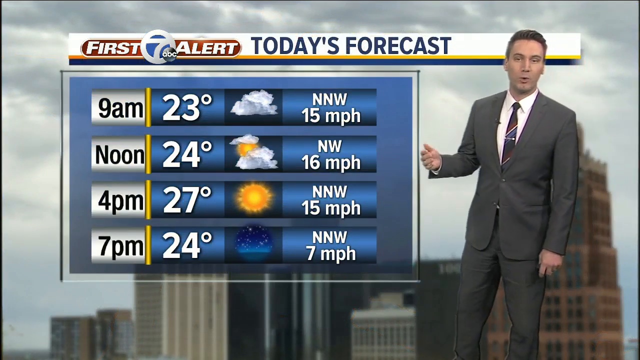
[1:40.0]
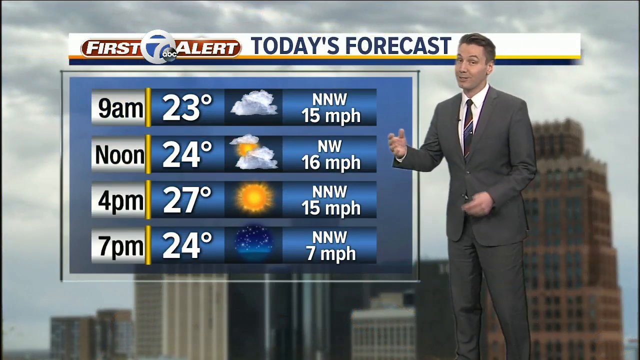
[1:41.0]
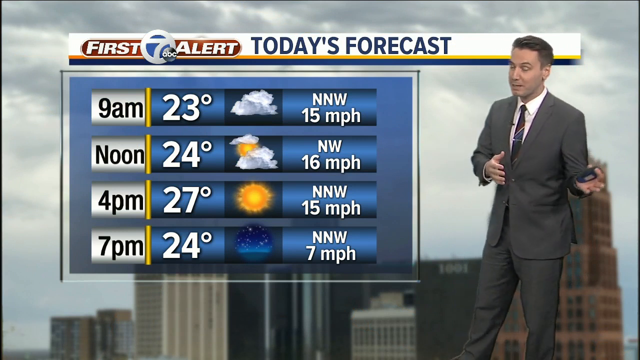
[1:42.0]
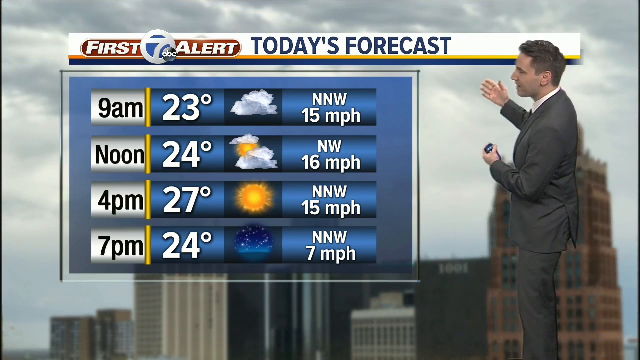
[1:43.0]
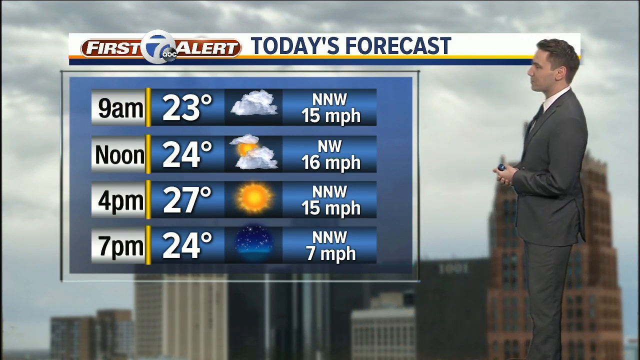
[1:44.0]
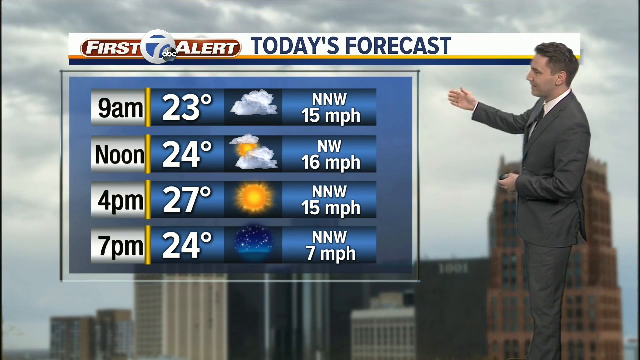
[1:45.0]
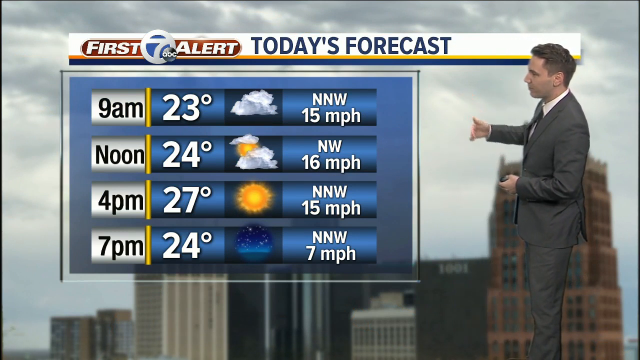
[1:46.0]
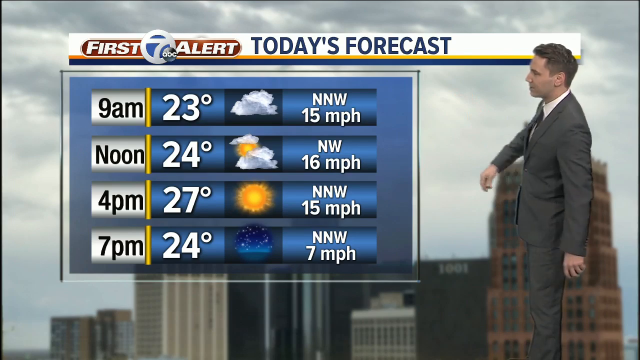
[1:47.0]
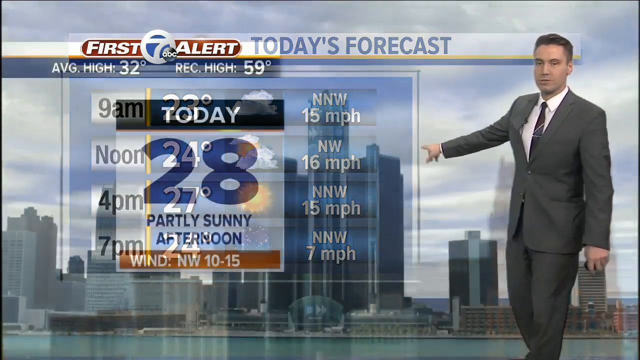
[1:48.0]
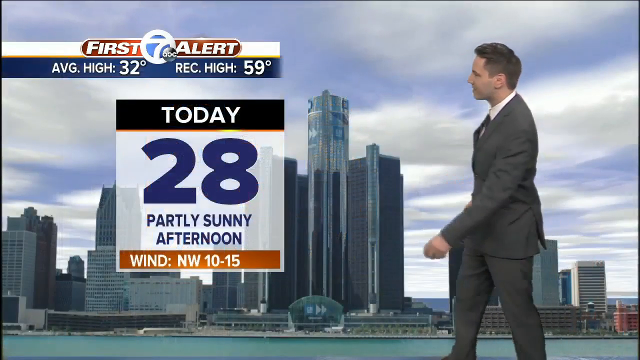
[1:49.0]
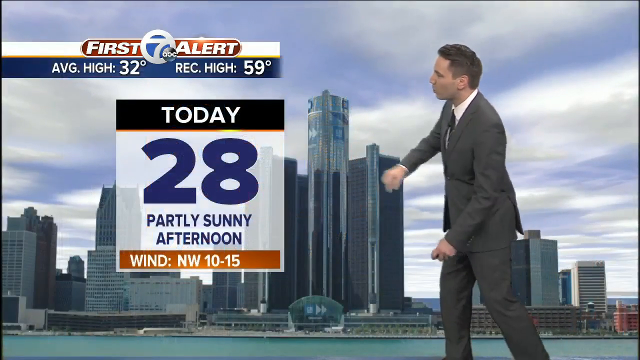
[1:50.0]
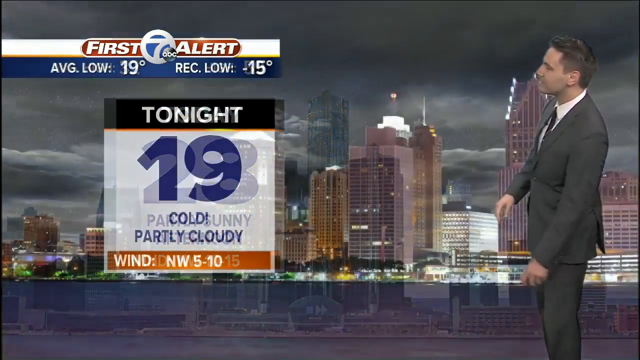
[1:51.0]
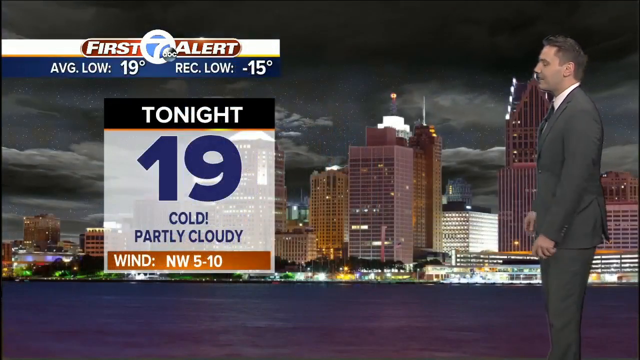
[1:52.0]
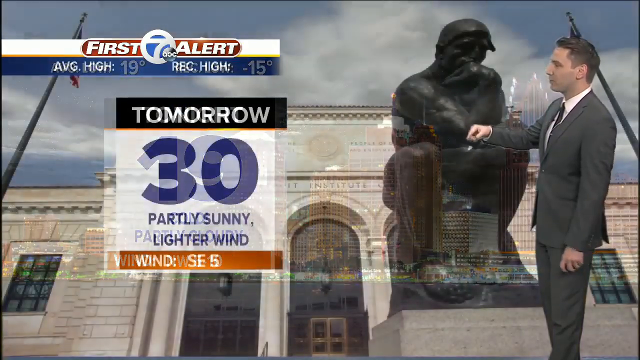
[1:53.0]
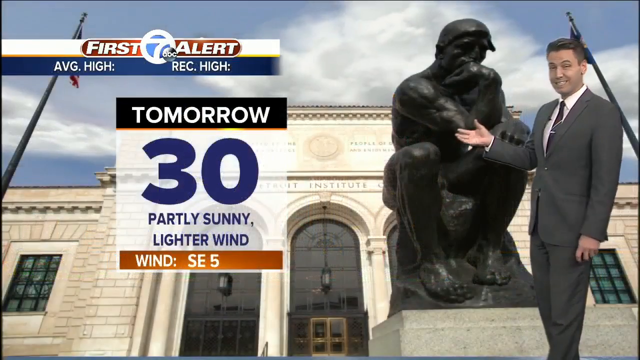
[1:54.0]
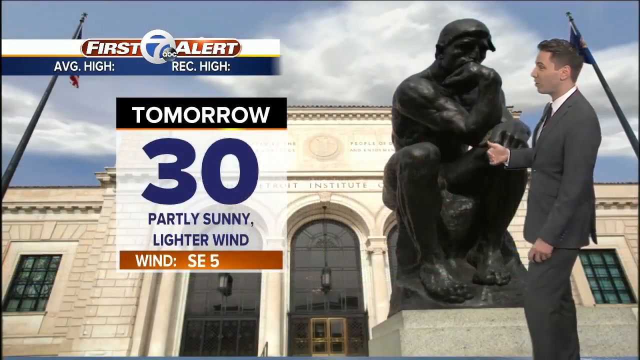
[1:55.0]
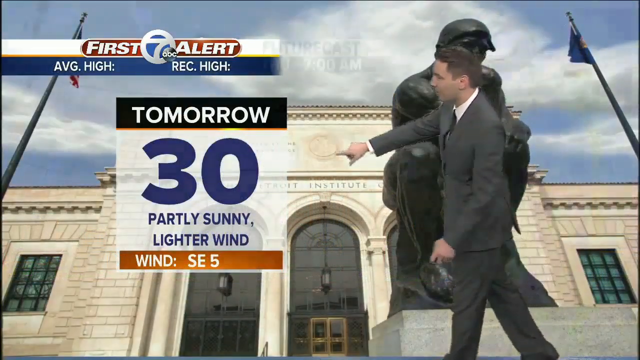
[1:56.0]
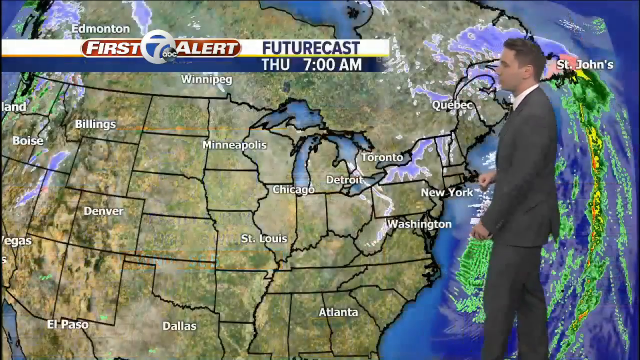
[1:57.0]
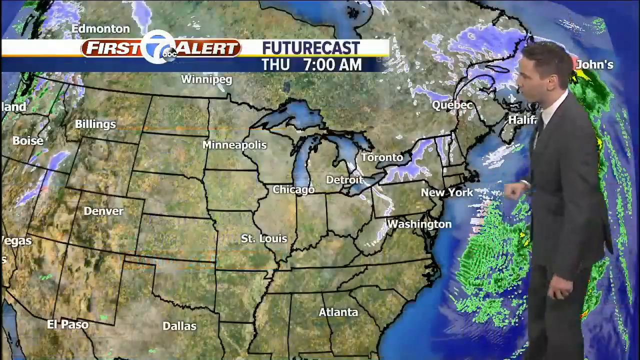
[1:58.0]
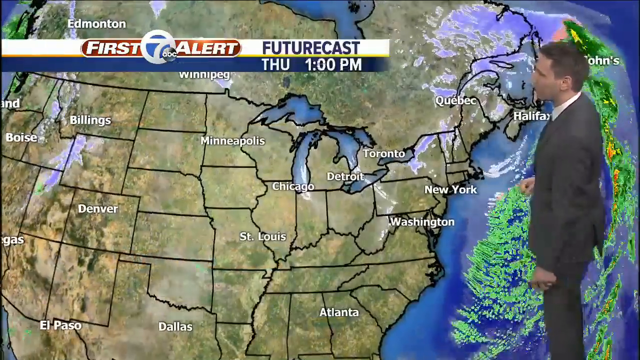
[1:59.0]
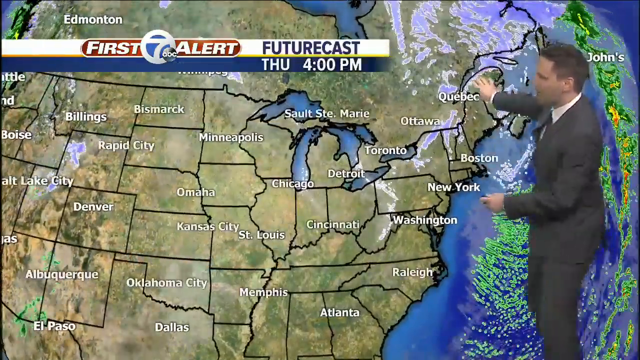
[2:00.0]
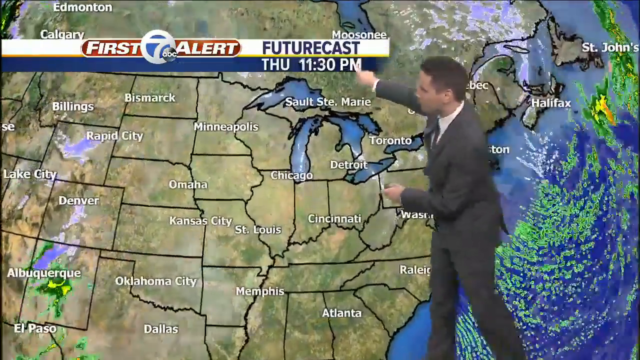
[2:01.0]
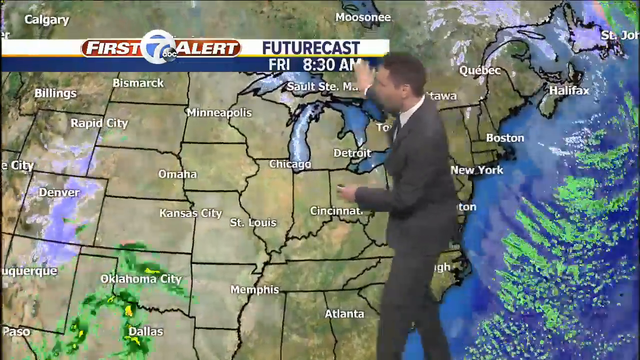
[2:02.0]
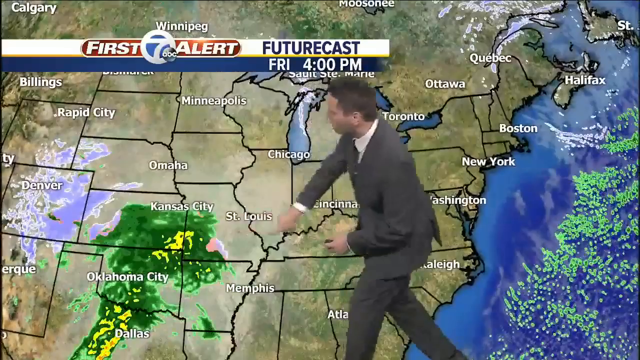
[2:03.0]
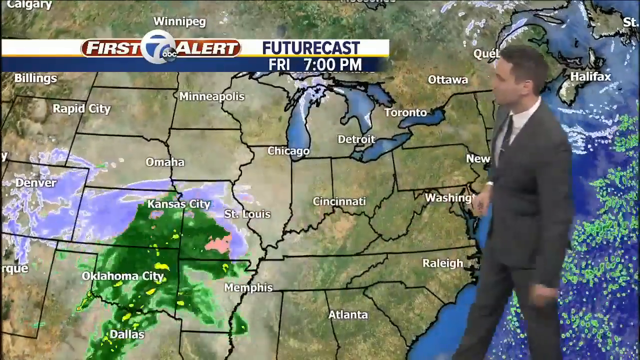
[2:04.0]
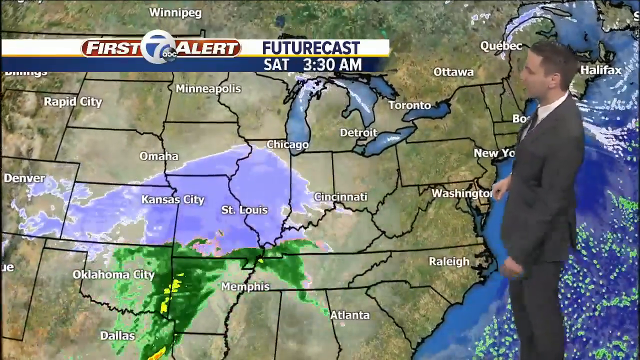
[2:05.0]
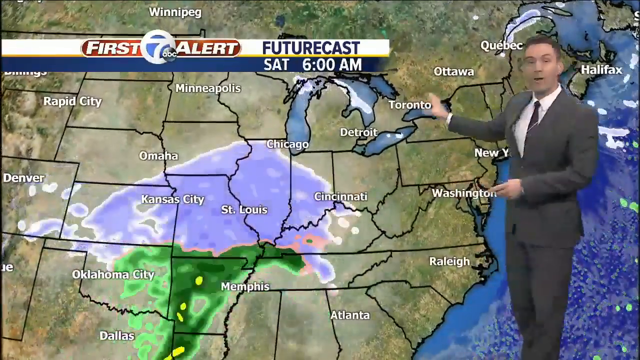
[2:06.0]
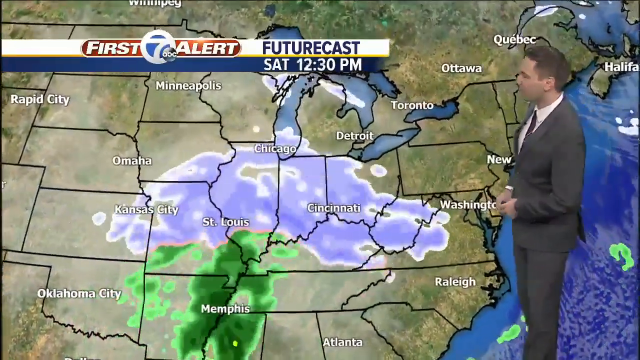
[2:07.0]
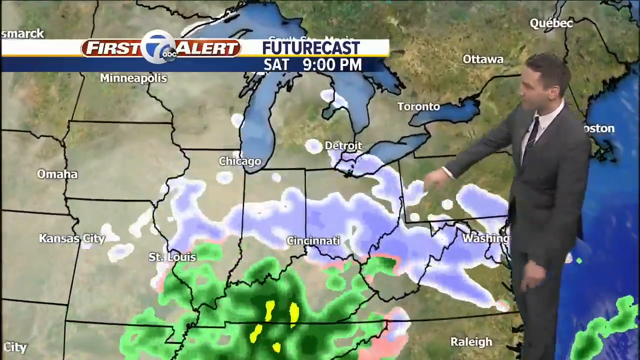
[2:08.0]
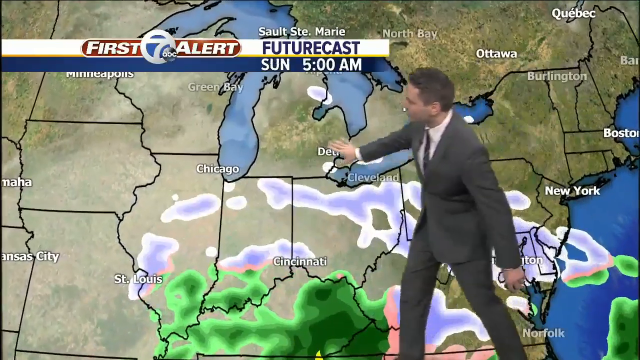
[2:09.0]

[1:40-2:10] Kevin is still at the weather map showing temperatures and today's forecast, with a picture of a city with clouds behind all of it. He points at something new that appears on the screen, which reads "today 28 partly sunny afternoon, wind northwest 10 to 15 miles per hour. Tonight 19, tomorrow 30, partly sunny, lighter wind." A map of part of the United States follows, and the camera zooms in while Kevin dramatically motions his hands all around and pushes his right hand forward. He is very fit and somewhat slender, maybe about 35 years old. He almost looks like he is doing aerobics, moving forward and bending his knee, then stepping back.